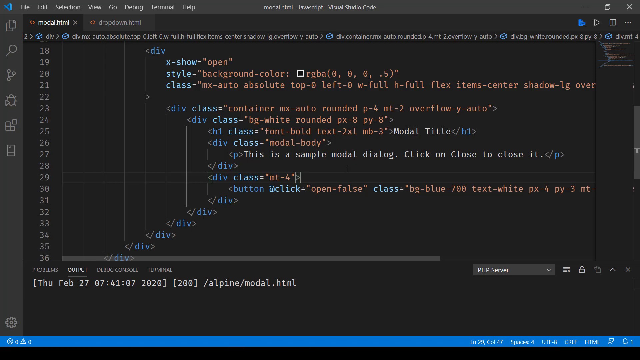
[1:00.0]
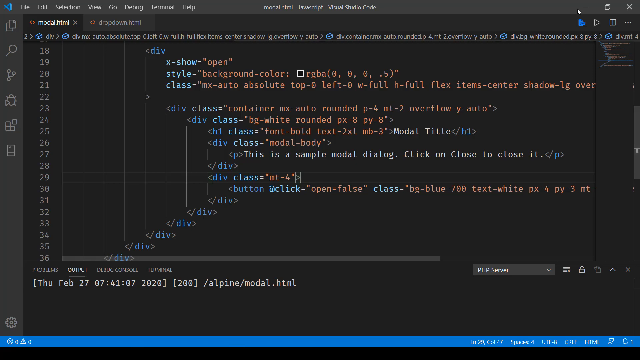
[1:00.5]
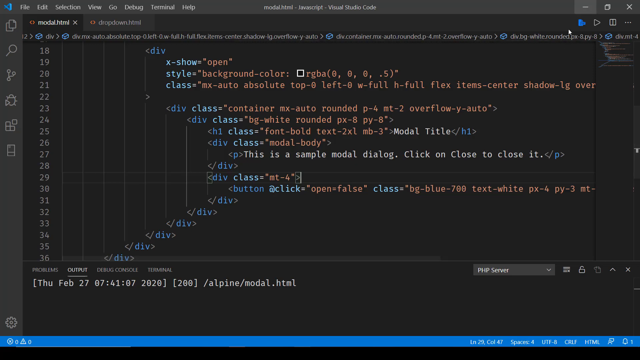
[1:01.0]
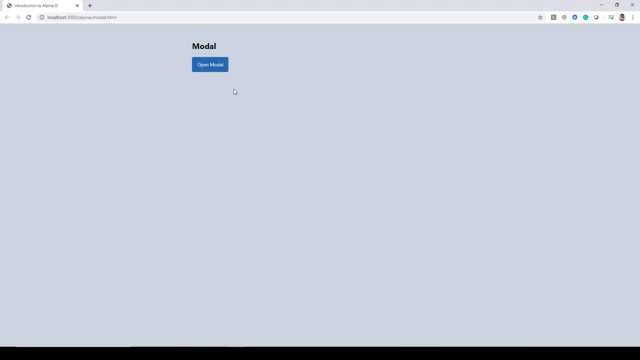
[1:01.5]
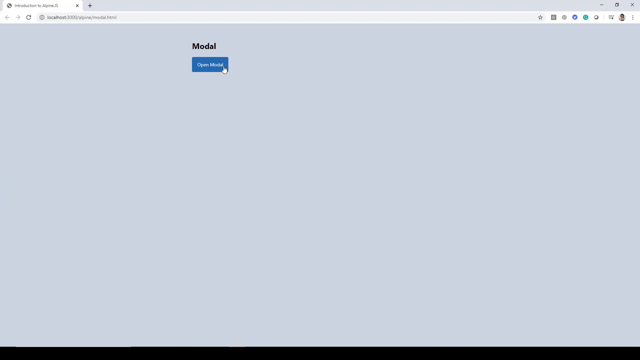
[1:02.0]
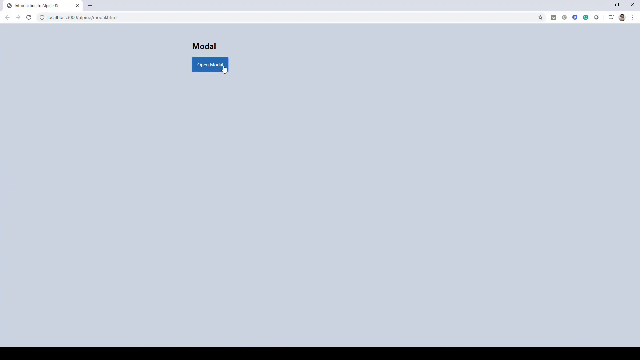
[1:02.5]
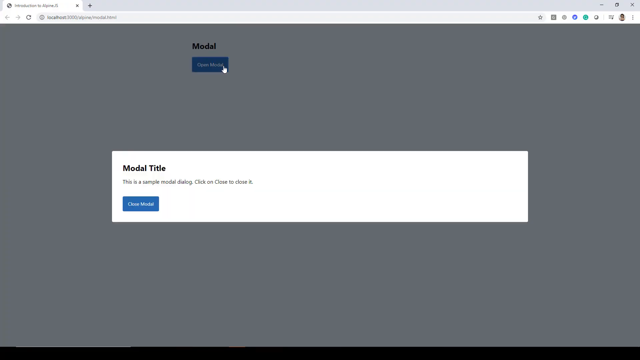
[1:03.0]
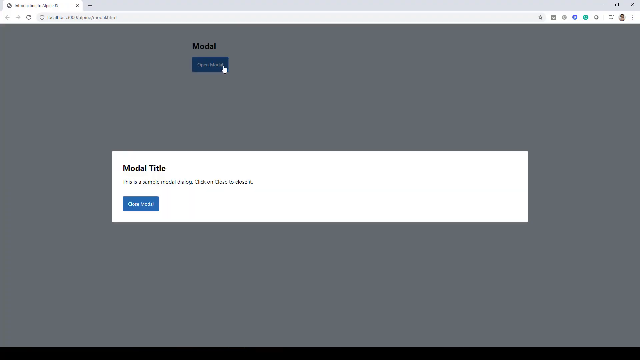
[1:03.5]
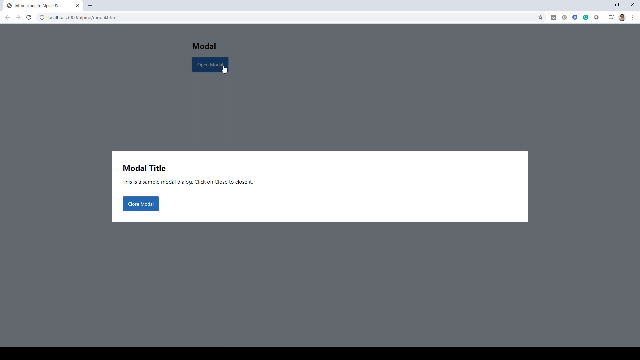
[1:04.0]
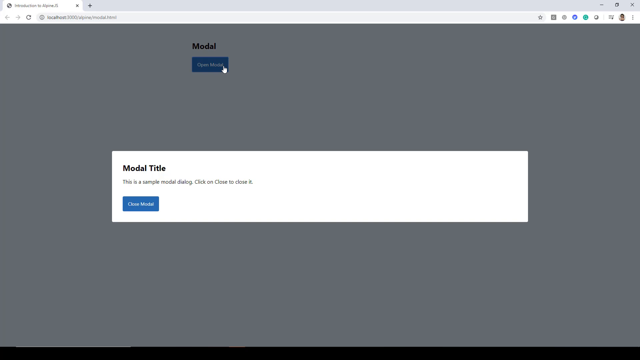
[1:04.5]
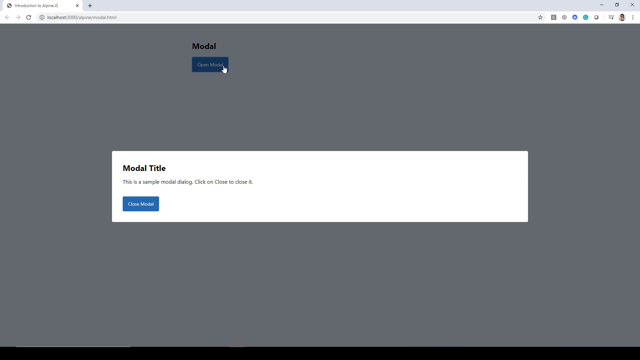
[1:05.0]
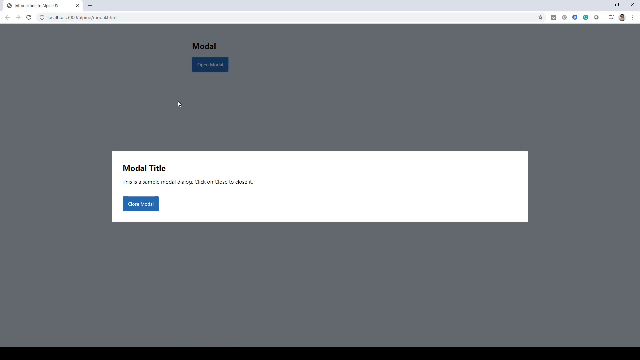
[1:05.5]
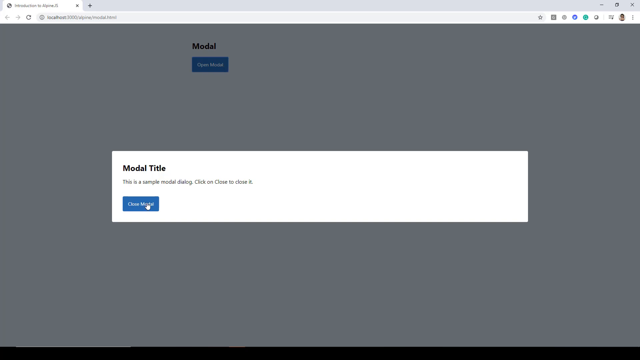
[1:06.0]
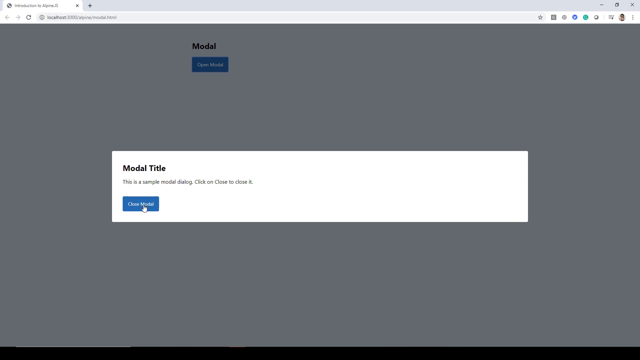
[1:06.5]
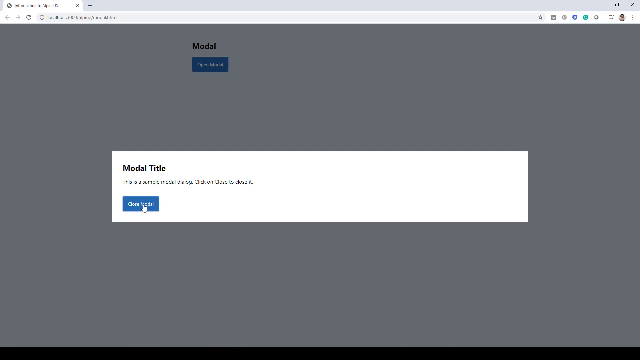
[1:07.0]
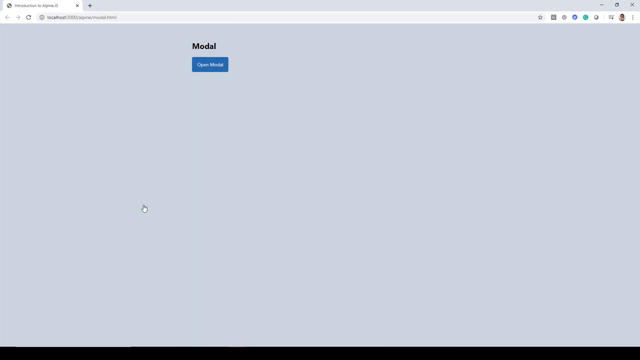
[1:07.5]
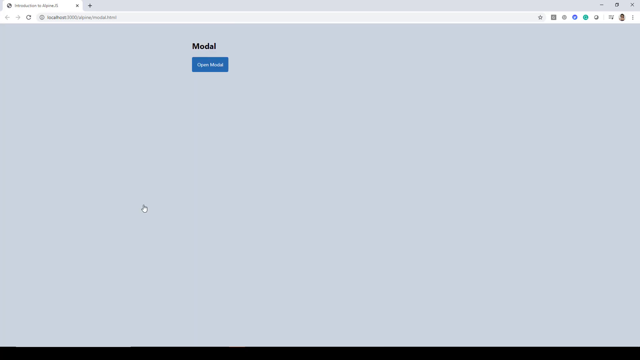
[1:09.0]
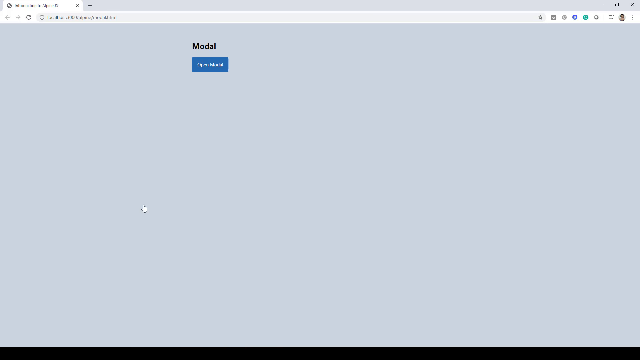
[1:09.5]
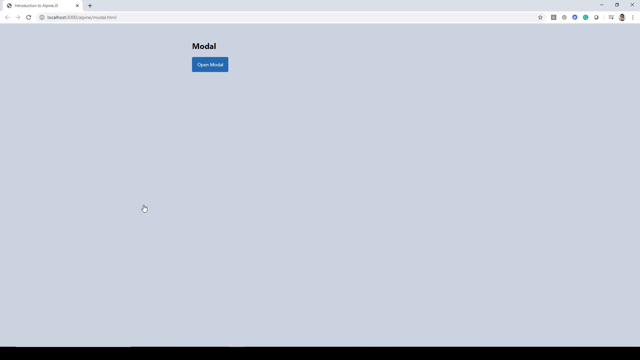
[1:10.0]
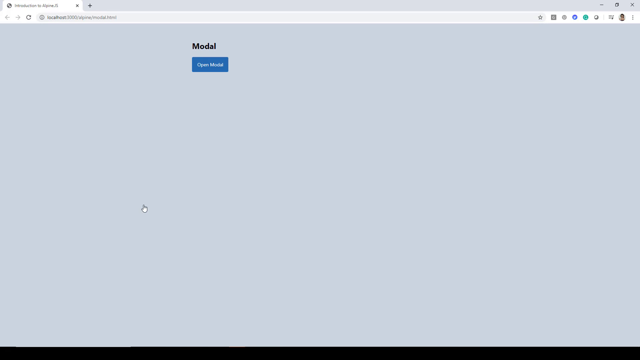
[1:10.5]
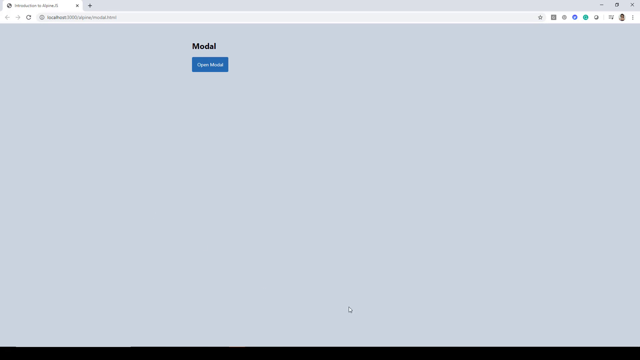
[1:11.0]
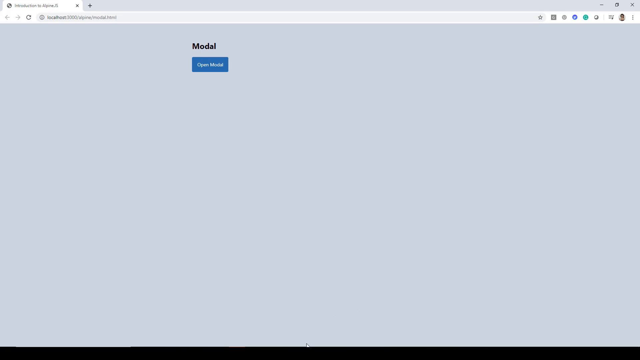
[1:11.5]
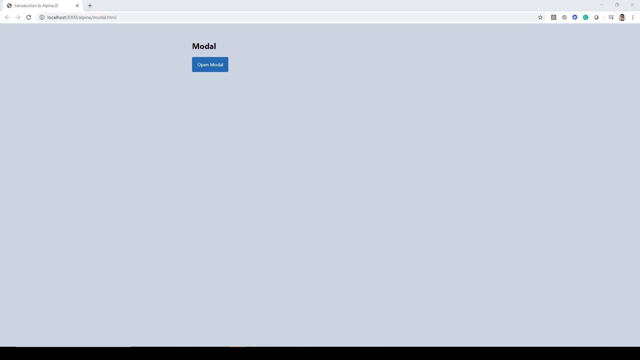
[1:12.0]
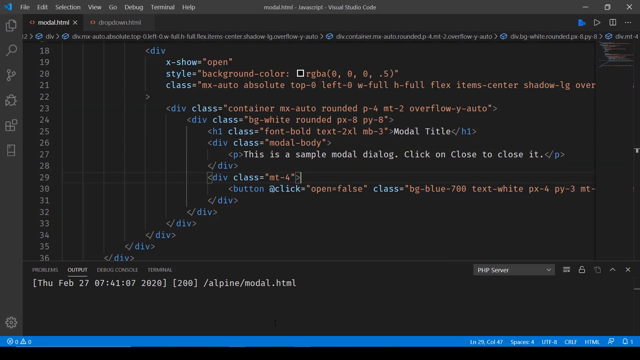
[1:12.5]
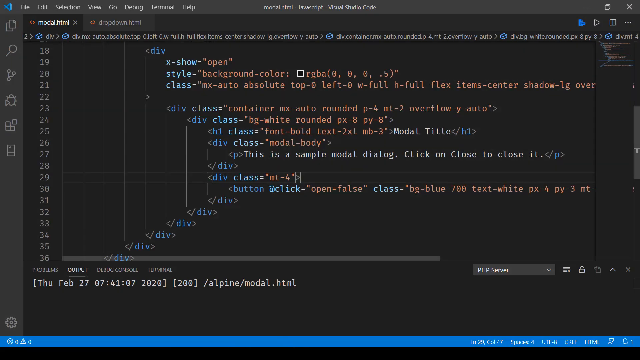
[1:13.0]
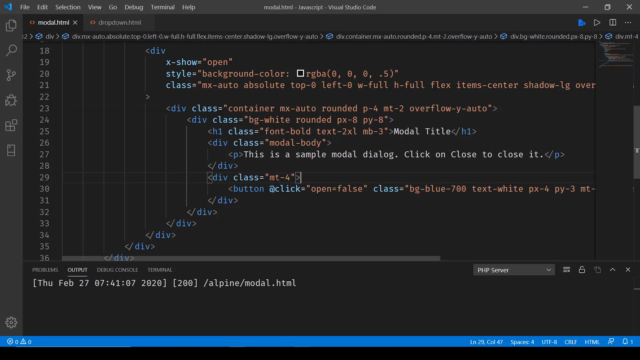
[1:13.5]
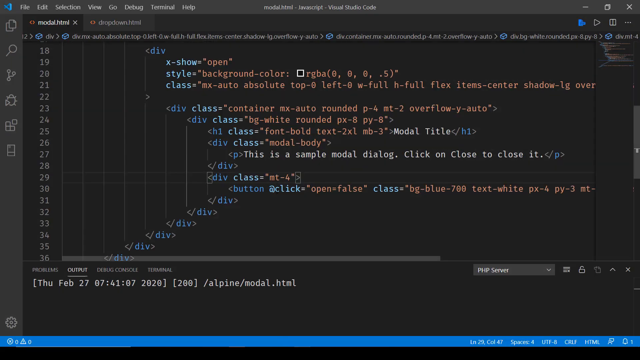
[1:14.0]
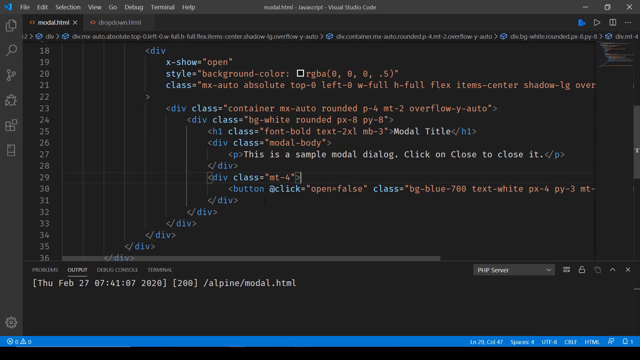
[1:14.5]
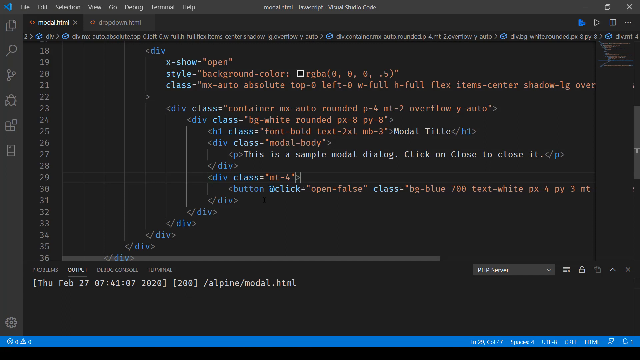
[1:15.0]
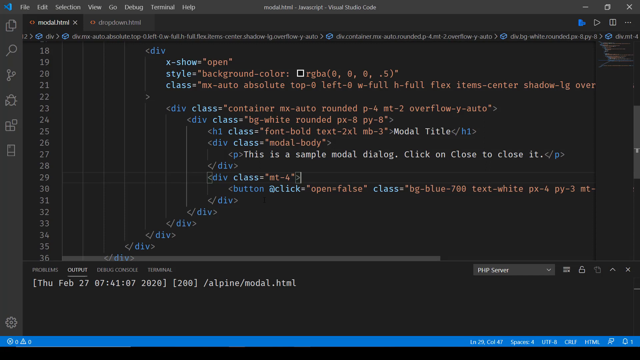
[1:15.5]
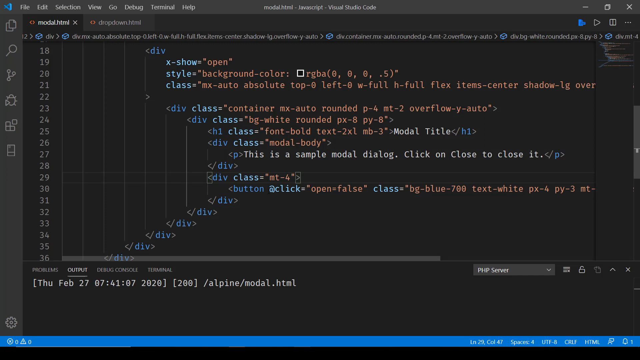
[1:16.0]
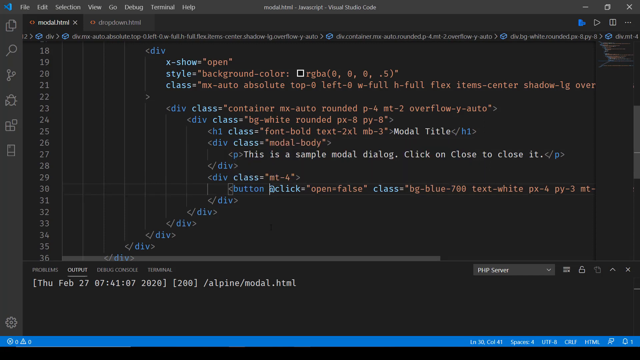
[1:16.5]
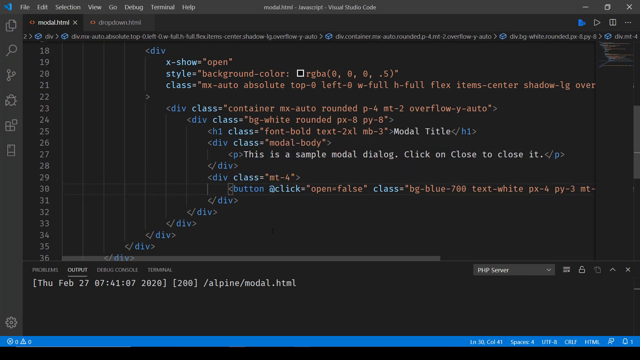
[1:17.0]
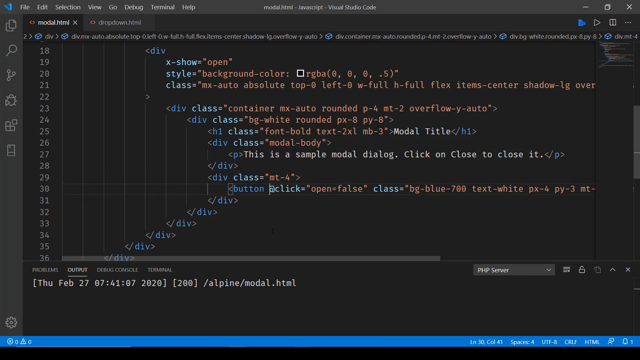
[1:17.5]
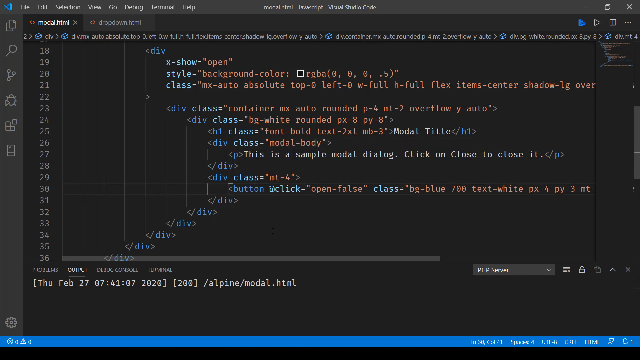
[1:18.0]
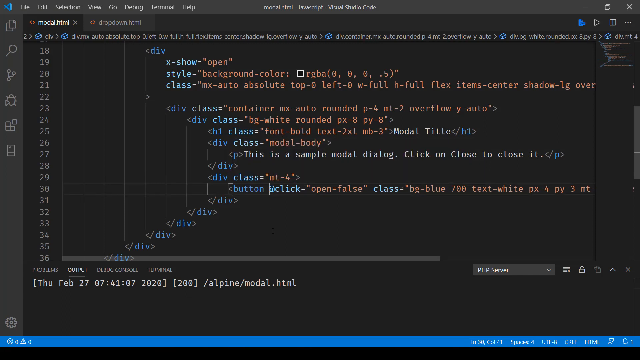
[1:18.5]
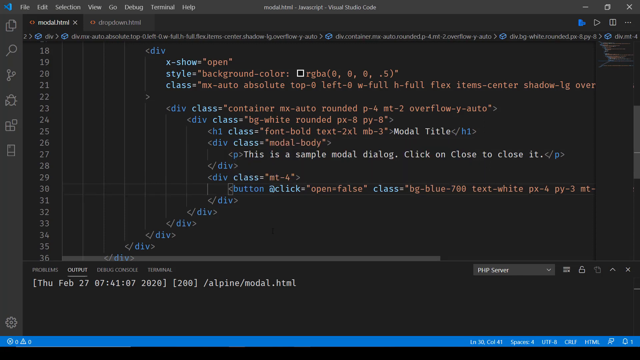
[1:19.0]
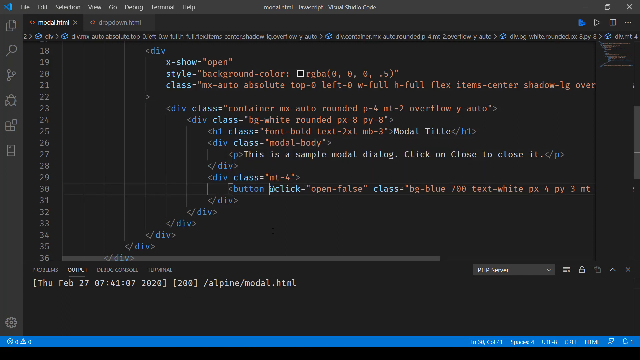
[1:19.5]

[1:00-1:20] The user minimizes the code and goes back to the localhost website in Google Chrome. They click the "open modal" button again, which brings up the same dialog box with its title, then click open modal again, and the code seems to reopen. The background is still gray, there is still no URL, the same extensions are there, and the browser is still Chrome. The code is now scrolled down near the bottom, where a number of divs are tabbed in, apparently closing the divs opened earlier in the code. There may be another background in a class.